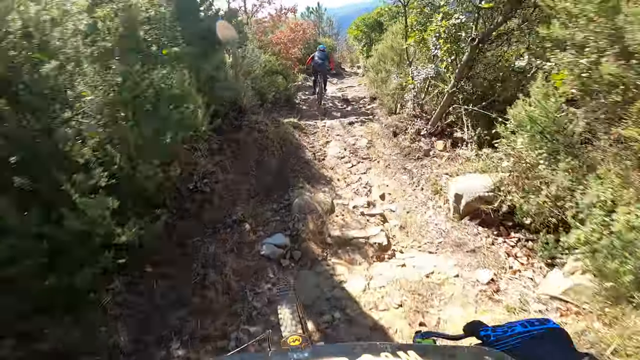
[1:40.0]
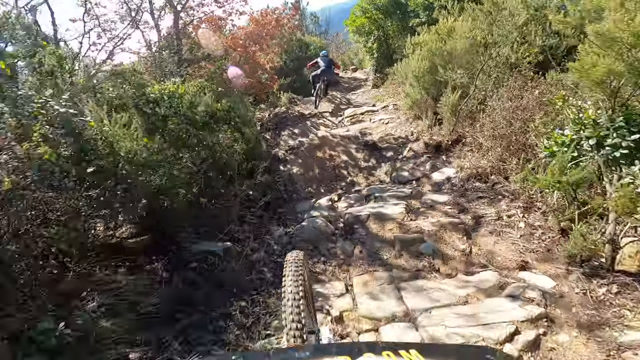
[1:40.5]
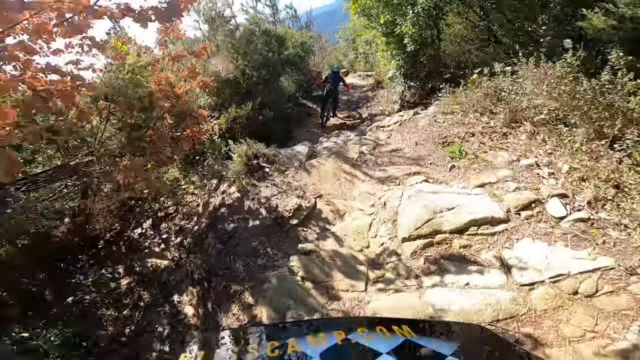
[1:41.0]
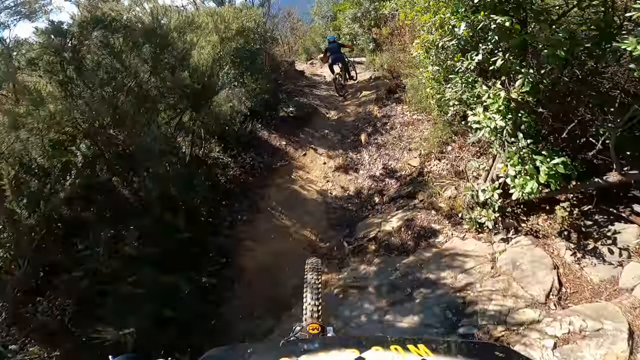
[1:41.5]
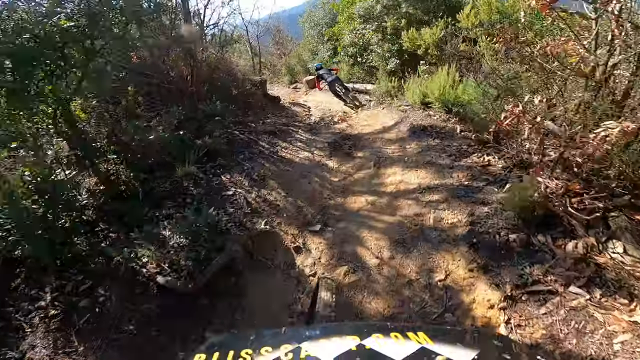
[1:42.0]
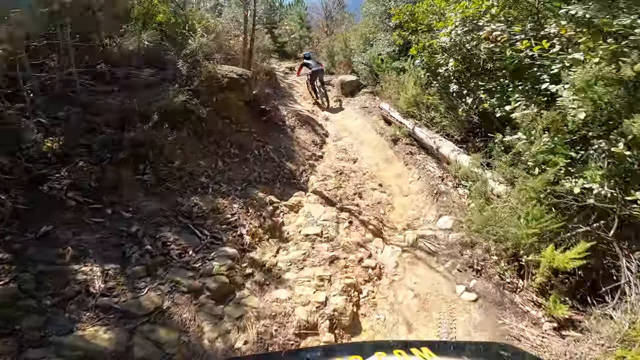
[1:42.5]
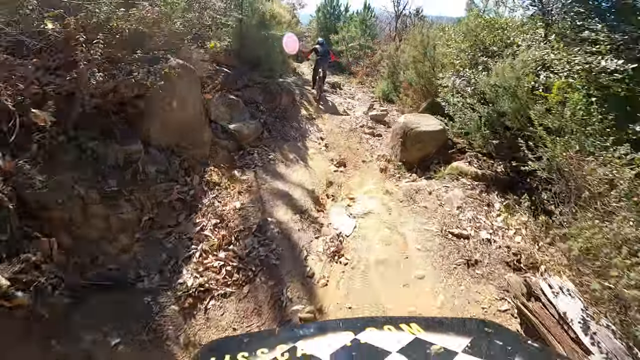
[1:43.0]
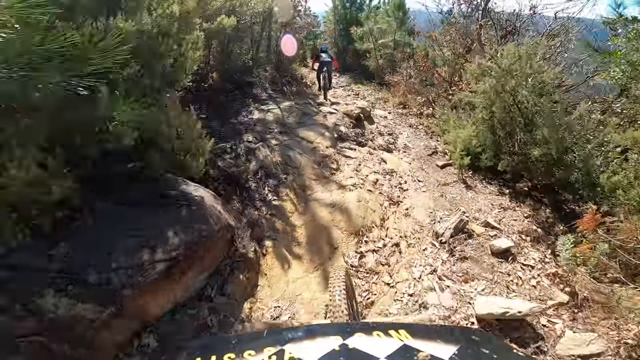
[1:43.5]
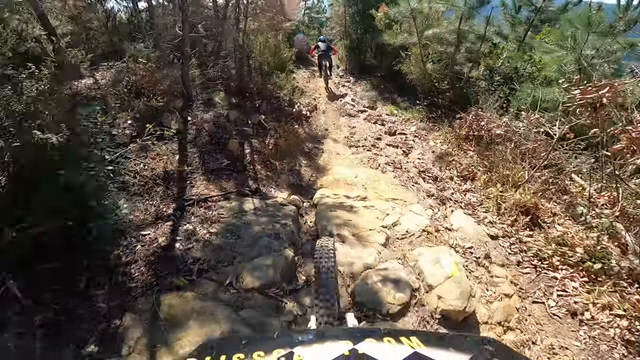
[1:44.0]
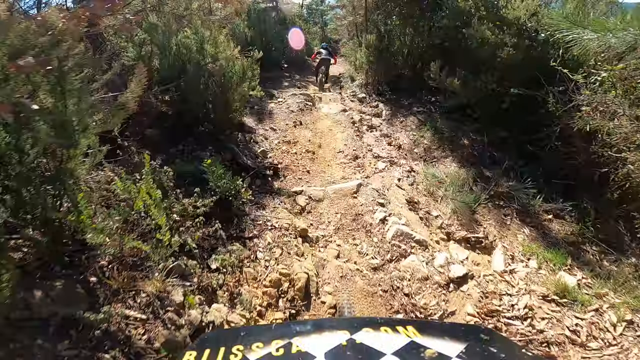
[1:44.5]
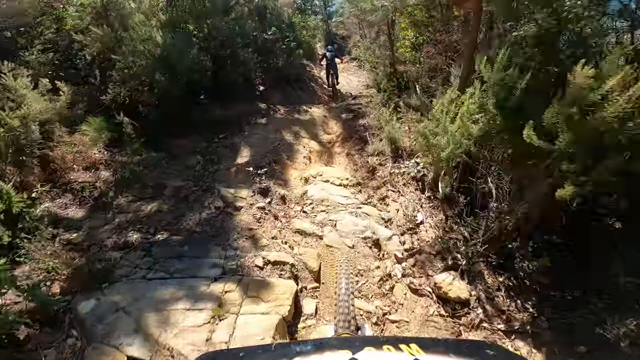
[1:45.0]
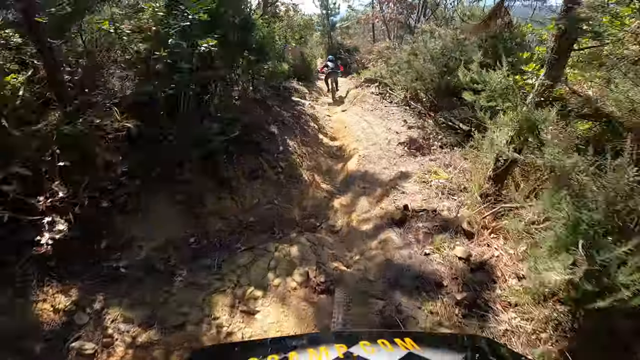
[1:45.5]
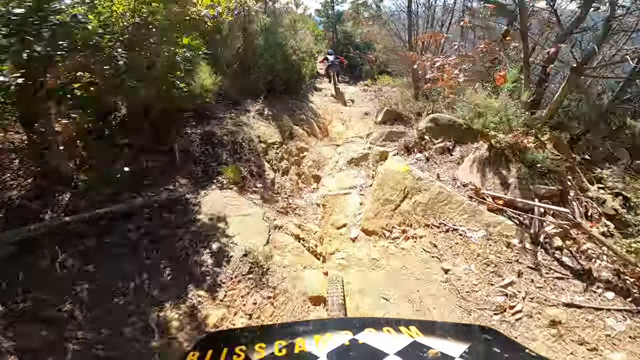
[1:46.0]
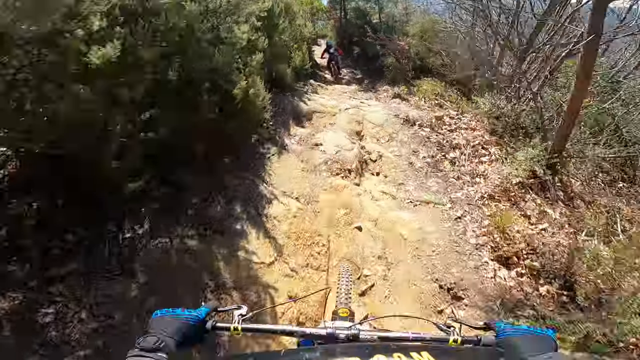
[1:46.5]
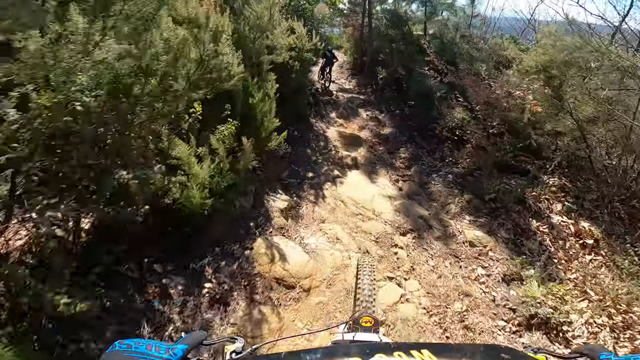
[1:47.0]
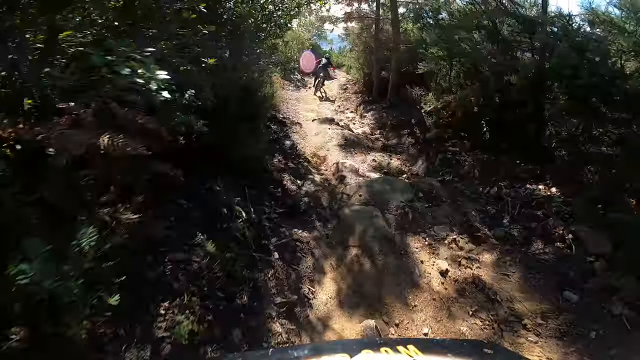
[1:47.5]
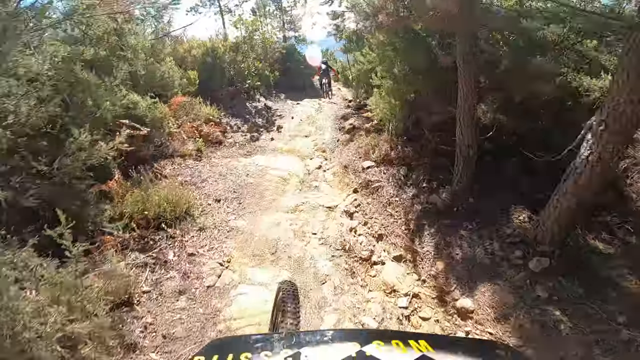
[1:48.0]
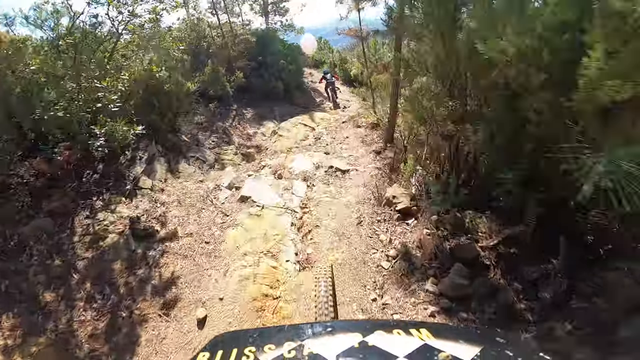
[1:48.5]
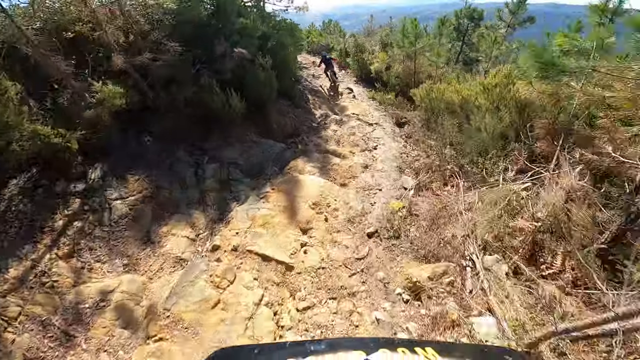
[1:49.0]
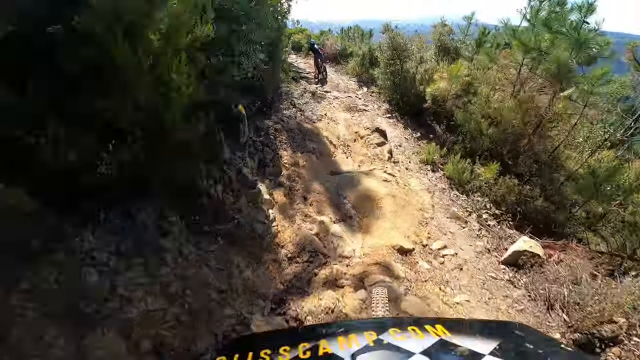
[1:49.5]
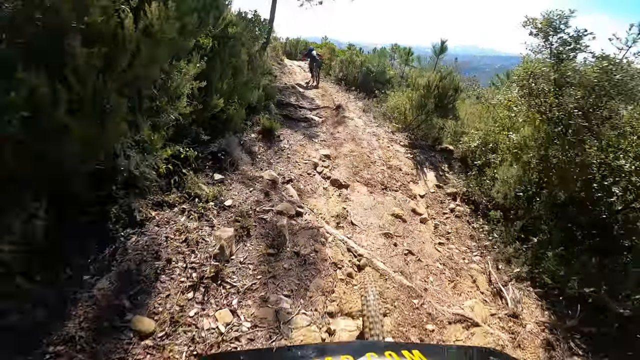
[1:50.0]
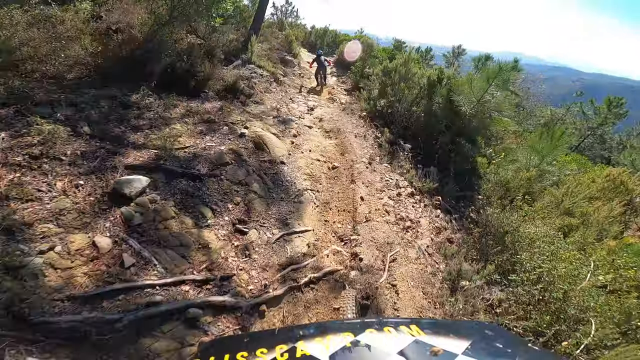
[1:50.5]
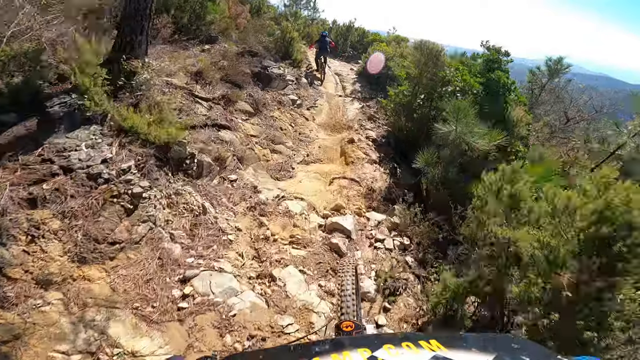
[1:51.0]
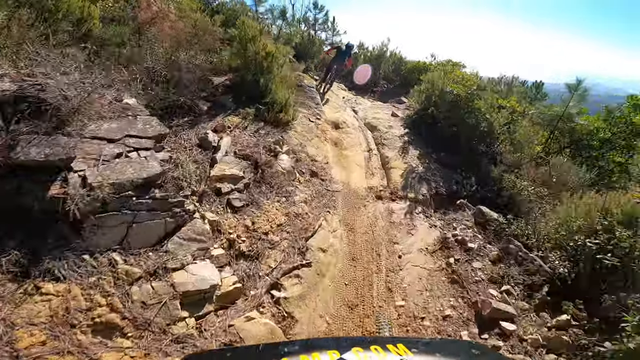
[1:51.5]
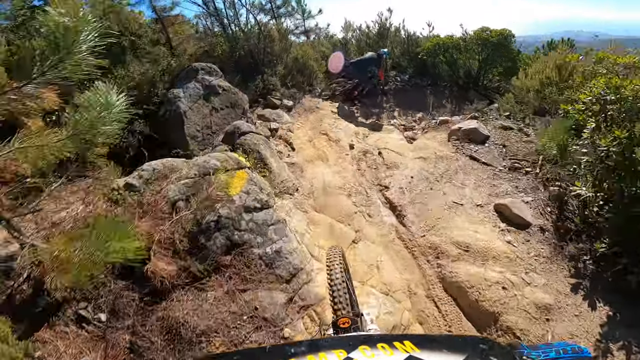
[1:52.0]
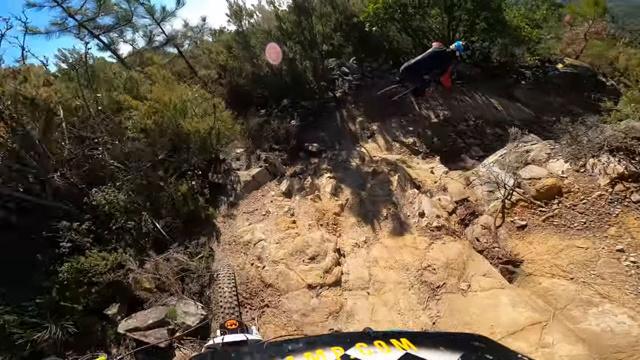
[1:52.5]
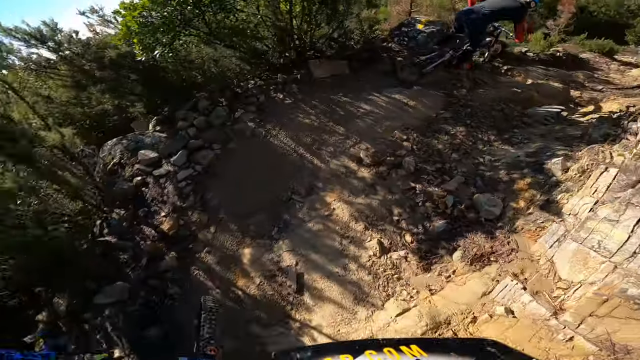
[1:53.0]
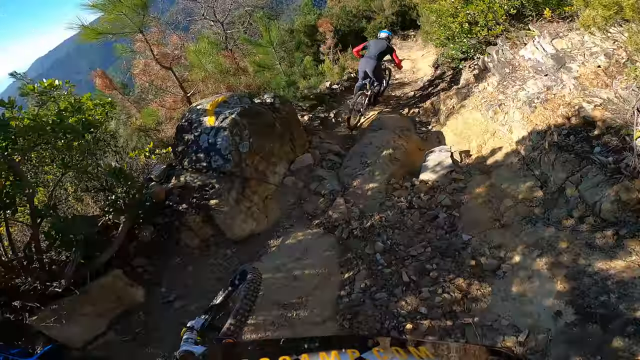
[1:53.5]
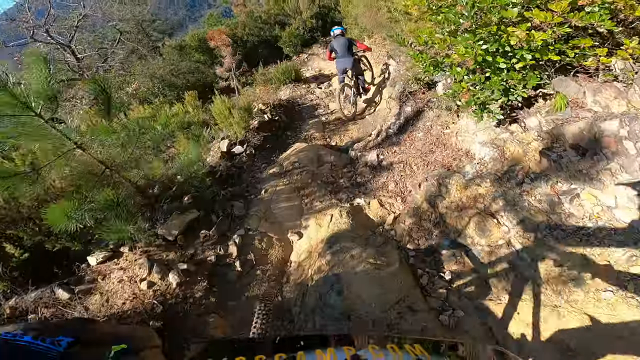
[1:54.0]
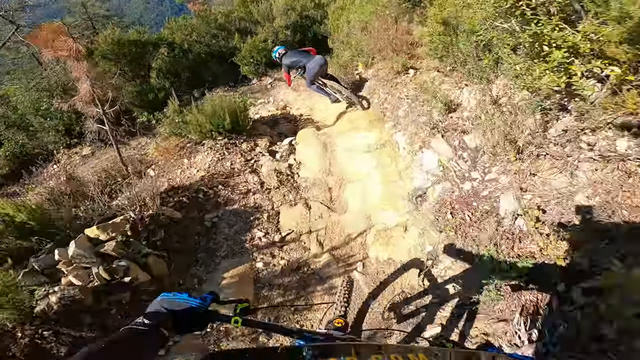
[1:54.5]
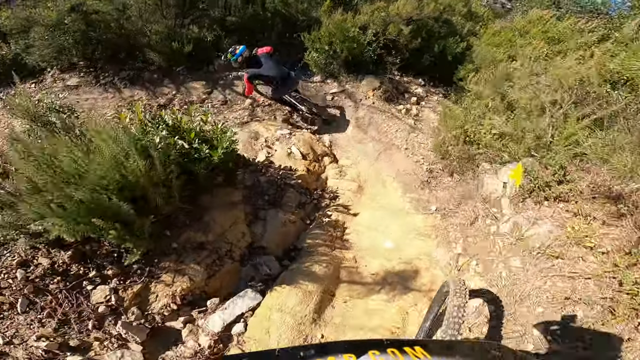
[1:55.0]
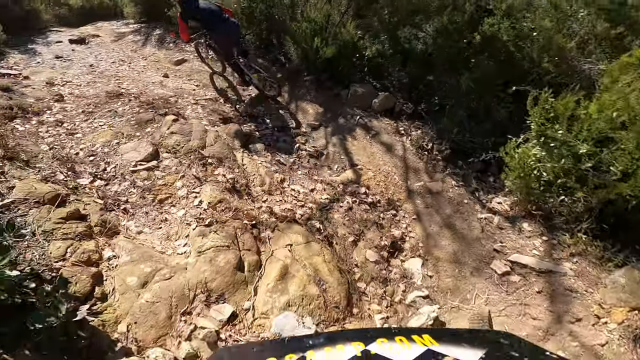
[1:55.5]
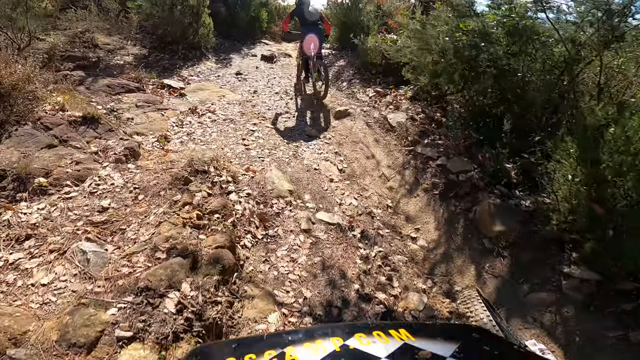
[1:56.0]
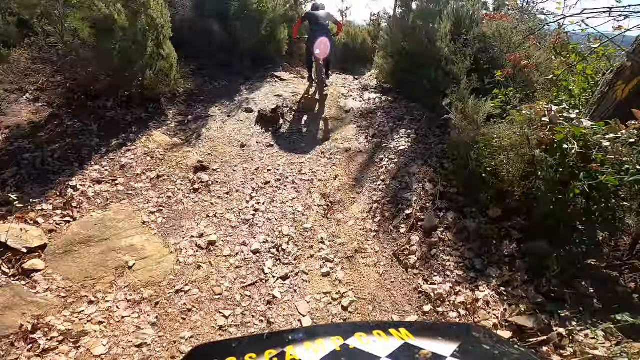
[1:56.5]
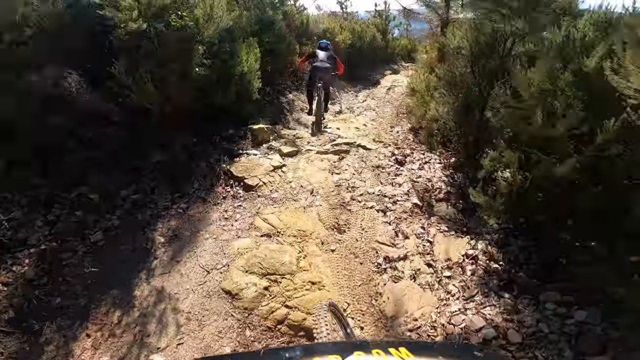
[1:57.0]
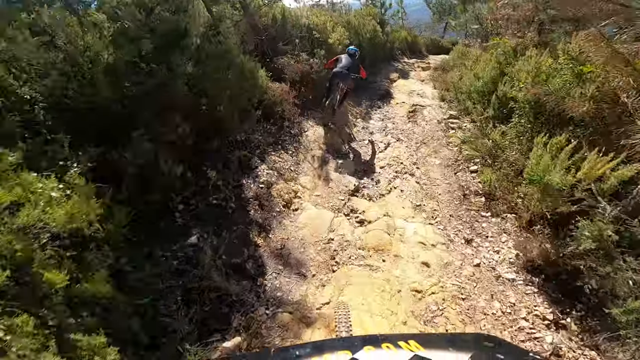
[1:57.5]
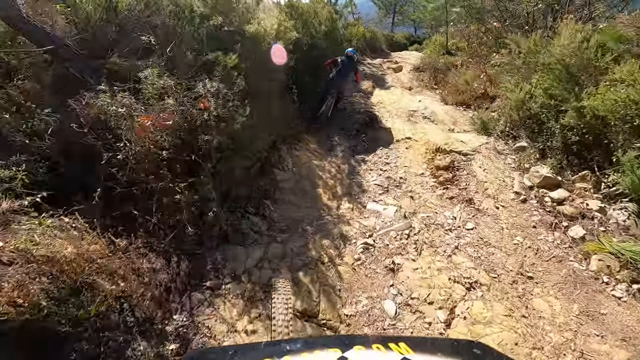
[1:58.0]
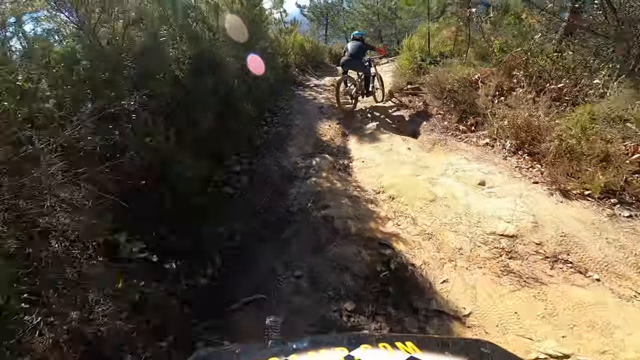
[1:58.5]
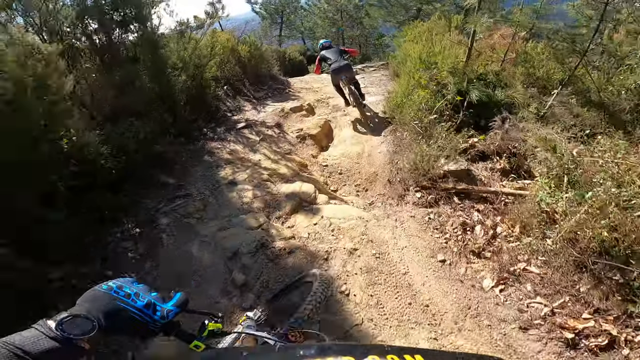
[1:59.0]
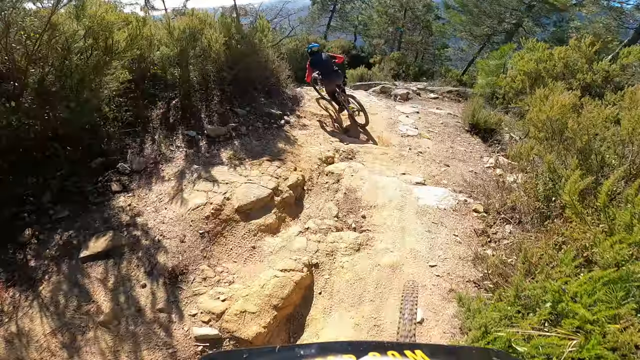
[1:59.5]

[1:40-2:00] The camera is still riding behind him, probably about 15 yards back. All kinds of debris cover the narrow road. The rider swerves to the left, then goes pretty much straight for a while, navigating different obstacles. The road slowly goes left, then hard right, then another hard left. The camera catches up to maybe 10 yards or less behind him. At various points the sun gleams in from the upper left. Rocks like boulders are very close to where he is riding. He is moving at what looks to be a fast pace, probably at least 35-40 miles an hour.